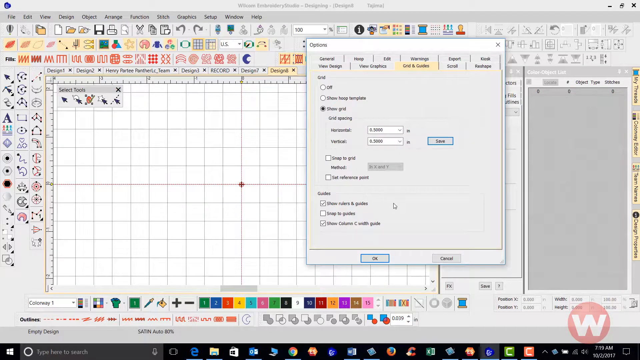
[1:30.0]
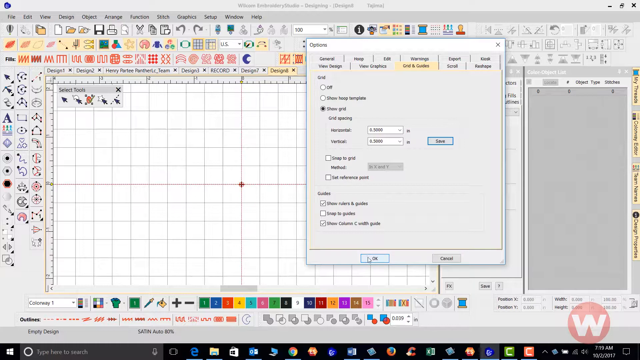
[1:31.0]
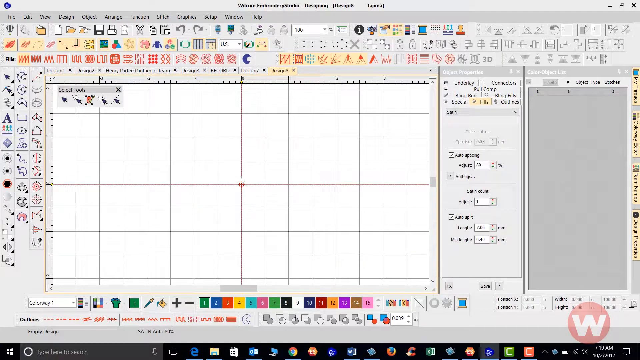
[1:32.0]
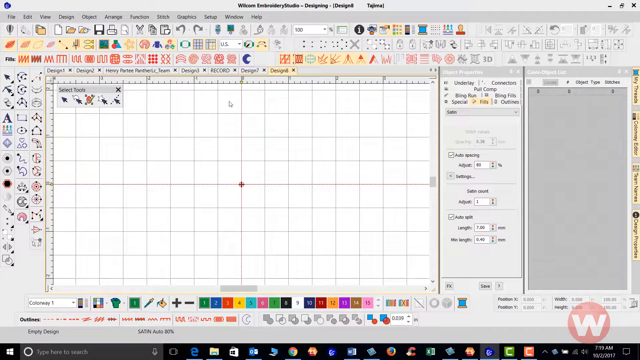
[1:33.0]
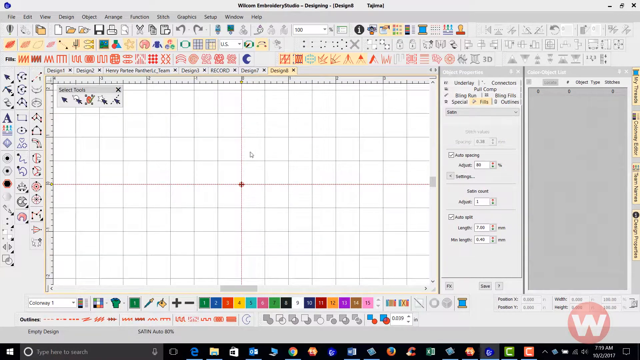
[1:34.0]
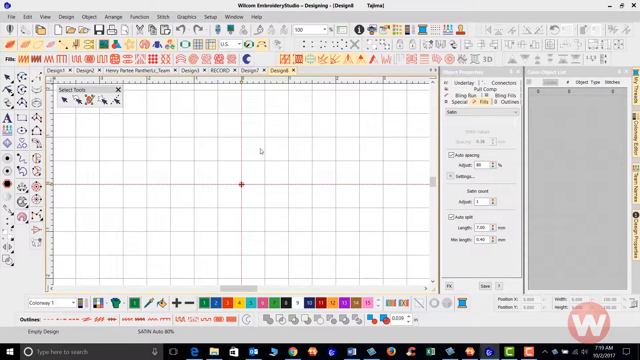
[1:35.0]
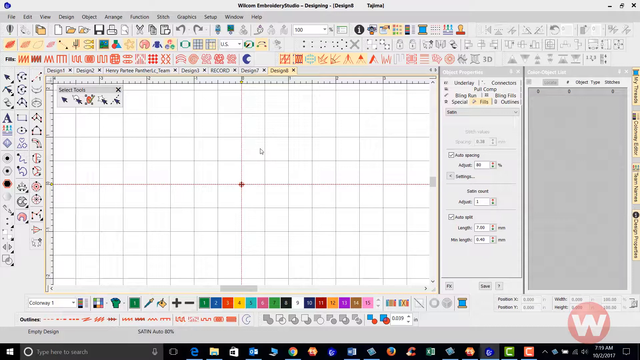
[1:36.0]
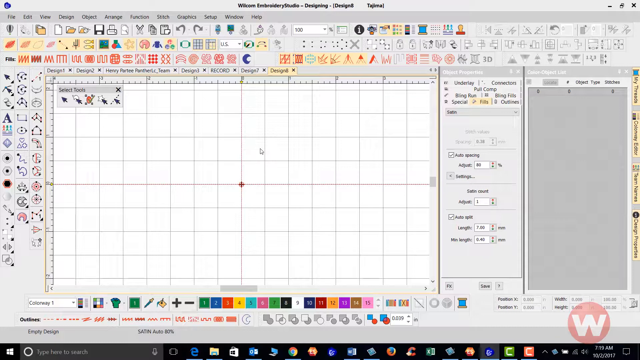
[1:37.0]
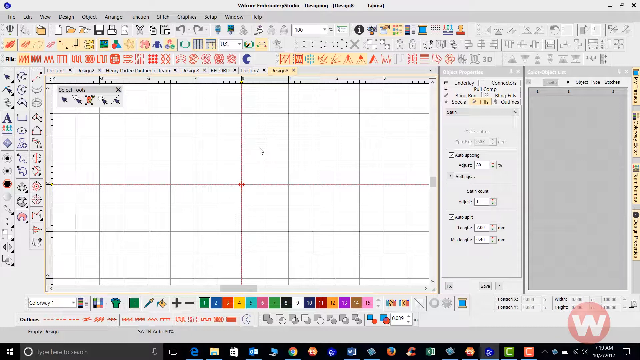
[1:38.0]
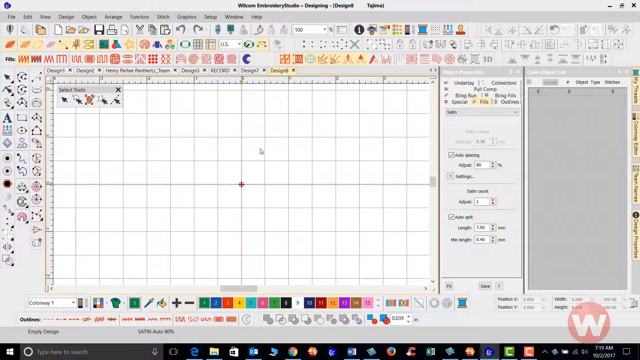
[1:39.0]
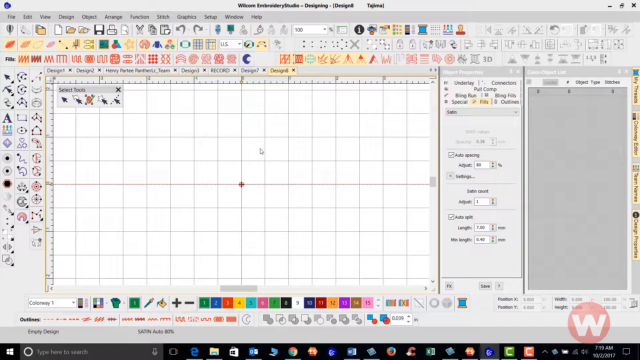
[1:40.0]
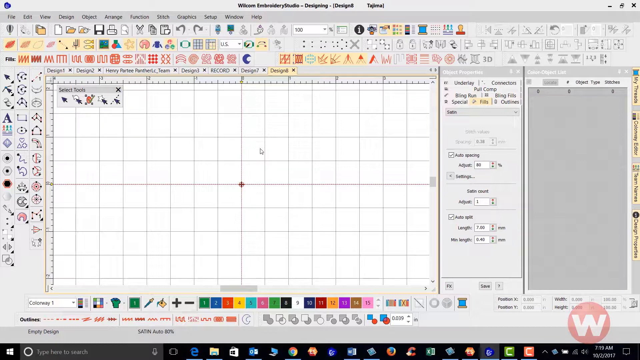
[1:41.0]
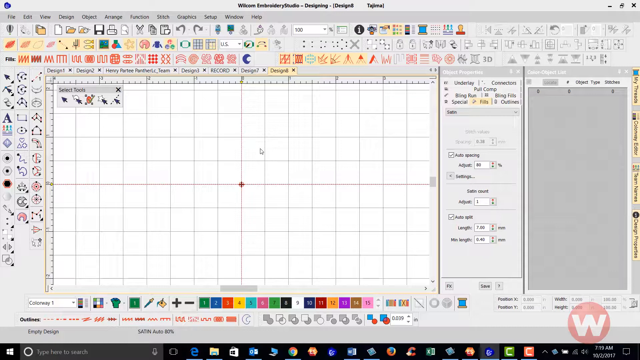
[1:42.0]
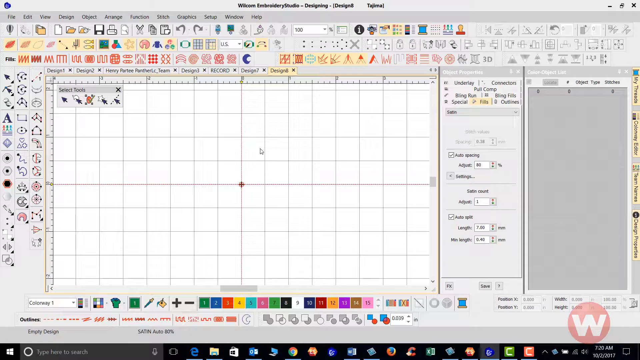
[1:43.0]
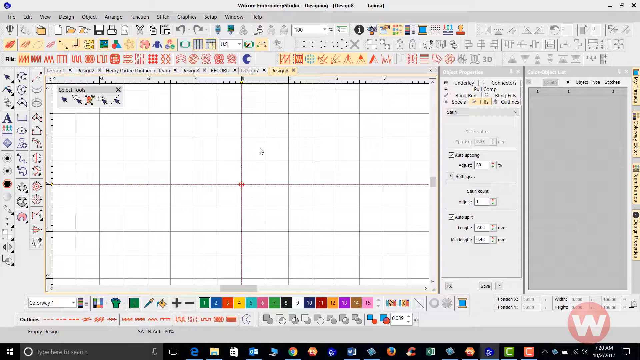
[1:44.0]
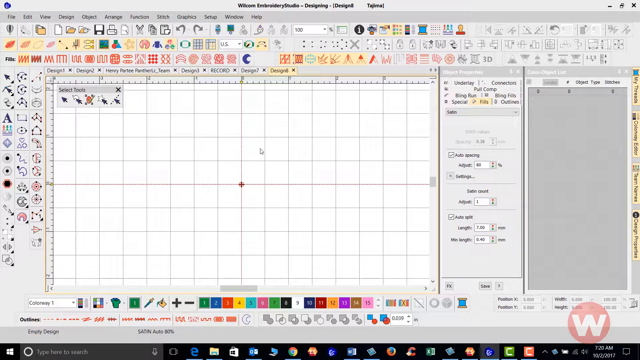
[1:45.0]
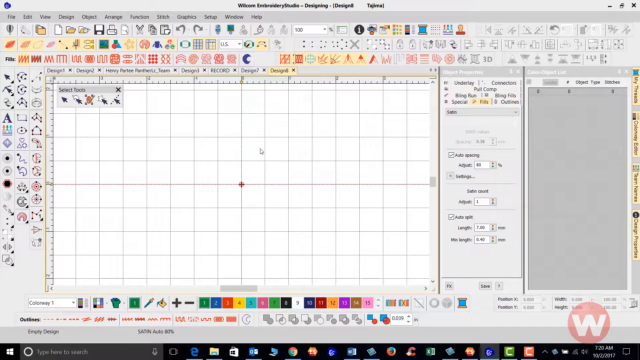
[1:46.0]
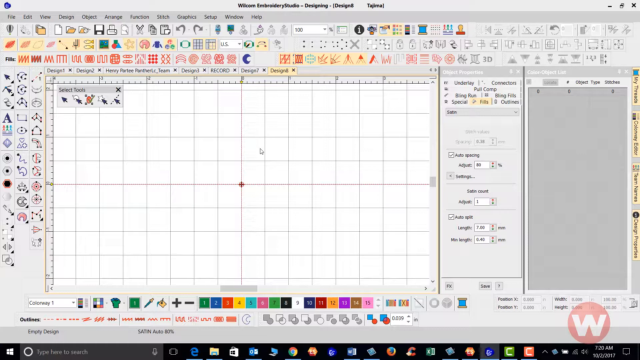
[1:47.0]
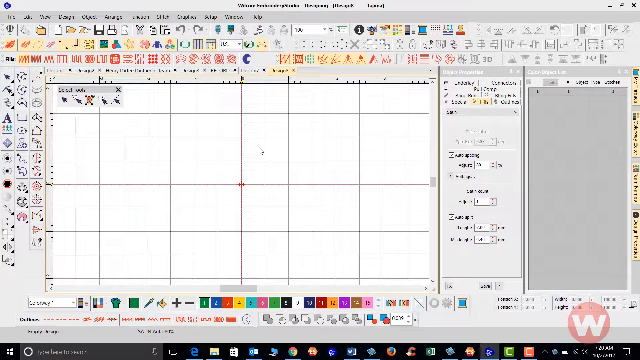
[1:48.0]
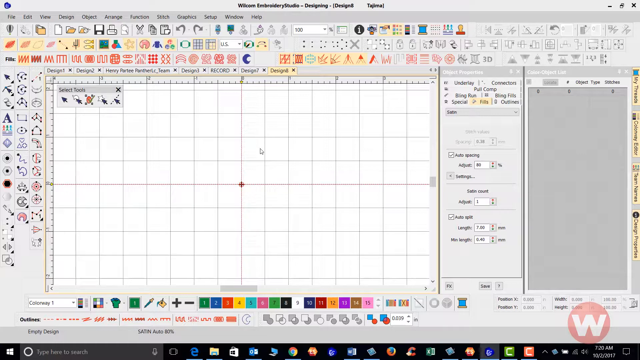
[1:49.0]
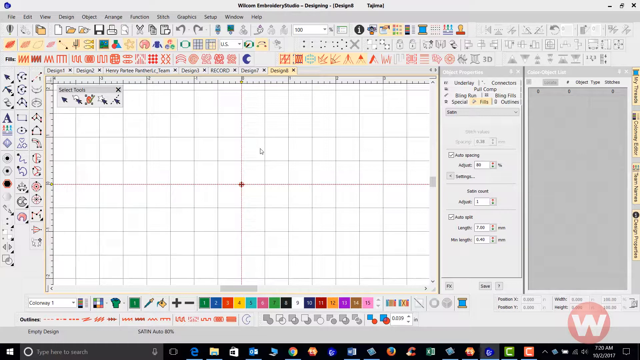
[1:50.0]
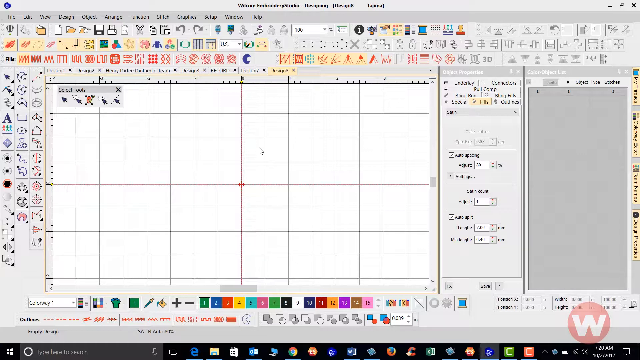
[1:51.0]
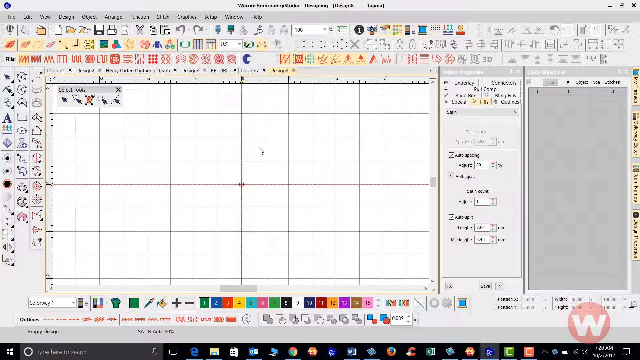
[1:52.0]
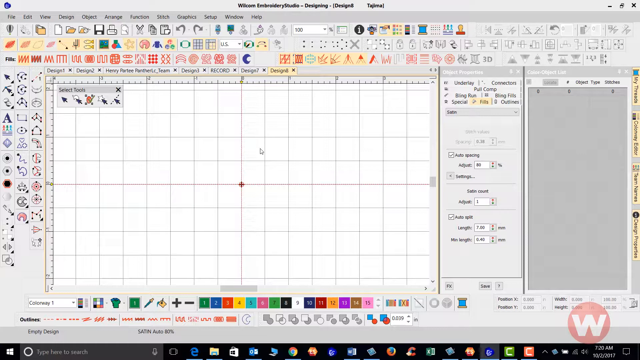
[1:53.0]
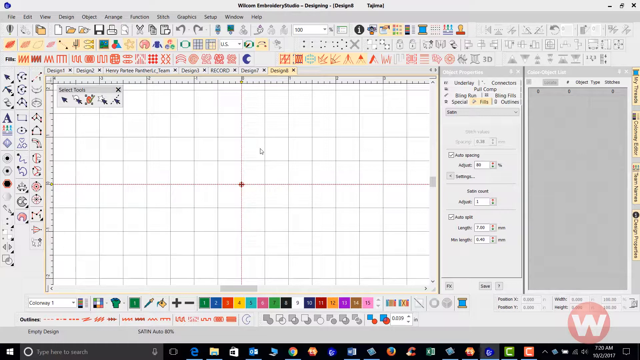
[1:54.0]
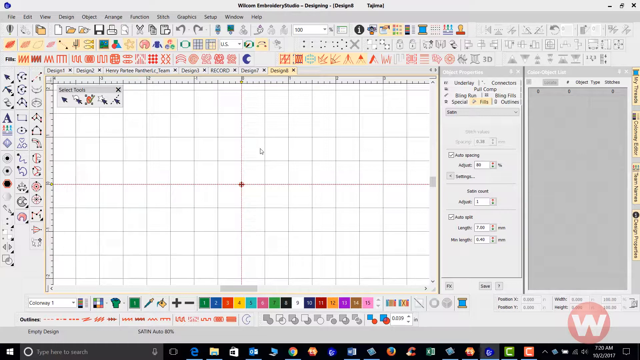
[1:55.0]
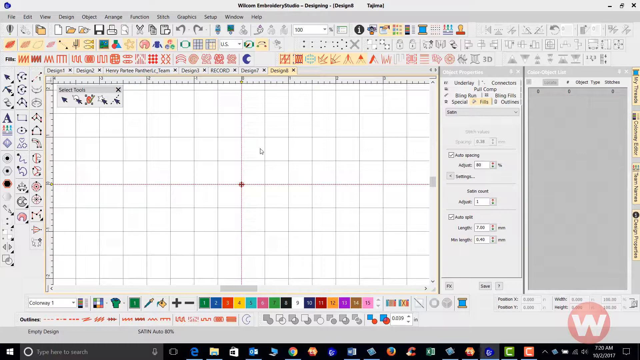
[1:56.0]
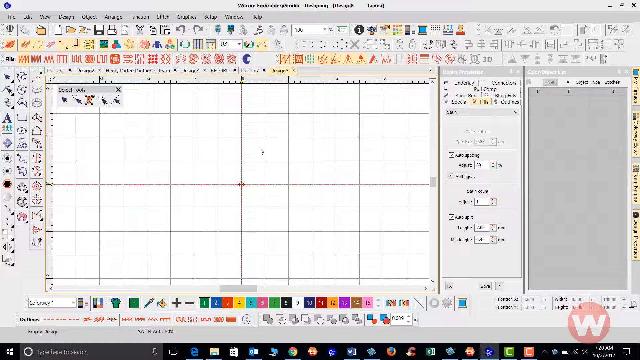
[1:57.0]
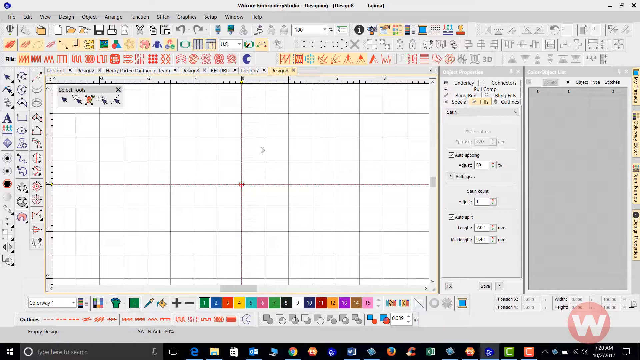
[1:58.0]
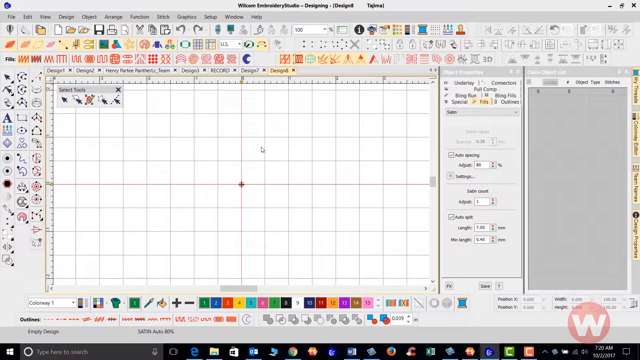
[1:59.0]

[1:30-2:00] The instructor presses OK and moves the cursor around in circles several times, about three times. An arrow for selecting tools is visible. The instructor then stops moving the cursor and holds it in one position within the grid. The grid screen shows many colors and the Wilcom icon at the bottom, like a watermark. There are multiple editing options, and some functions are greyed out and not in color, meaning they cannot be used at that moment. There is also an "A", apparently for editing the font type. At the end, the final screen flashes briefly.